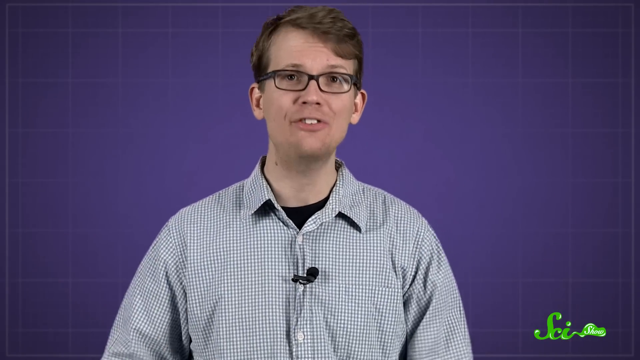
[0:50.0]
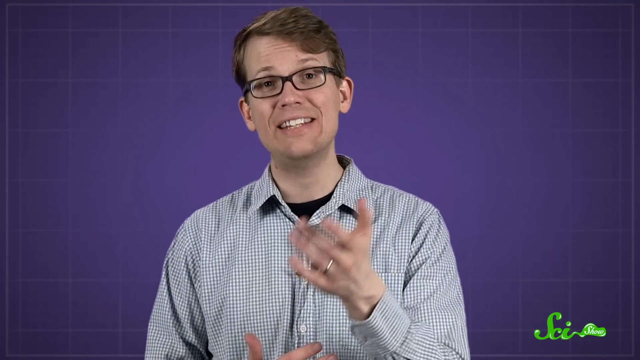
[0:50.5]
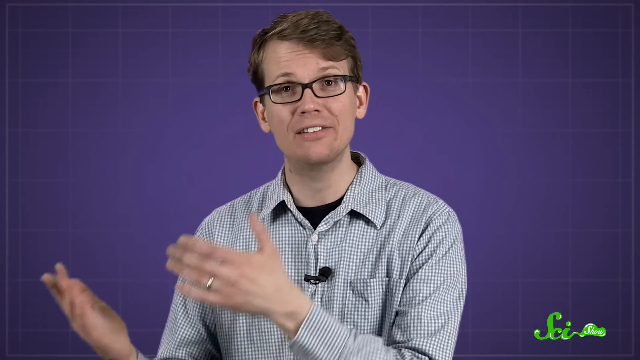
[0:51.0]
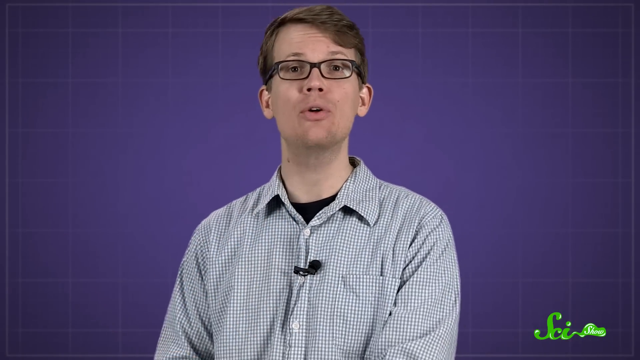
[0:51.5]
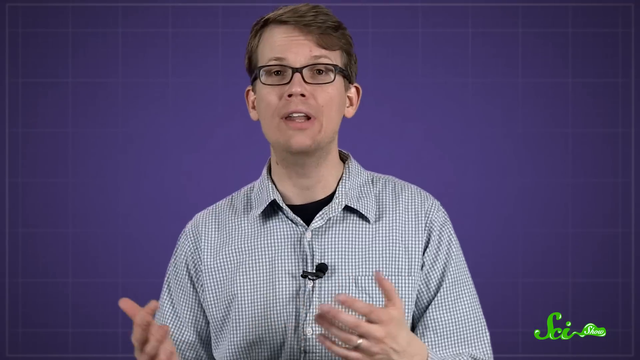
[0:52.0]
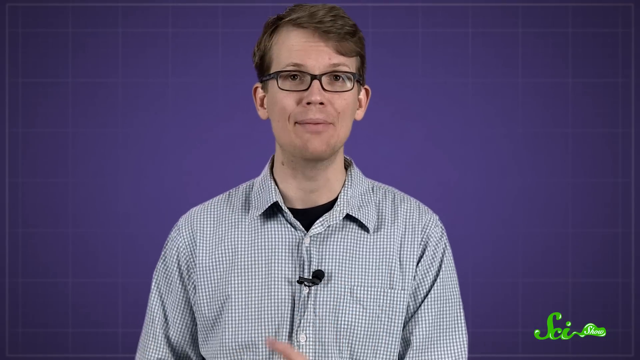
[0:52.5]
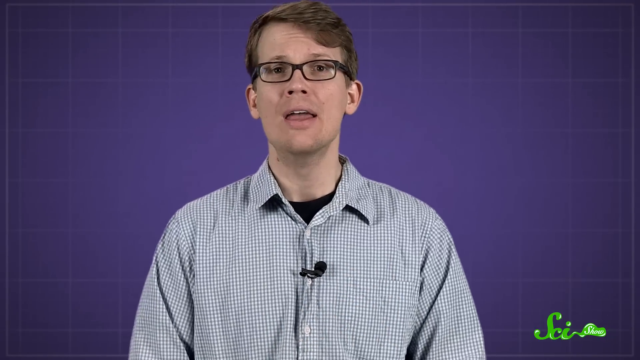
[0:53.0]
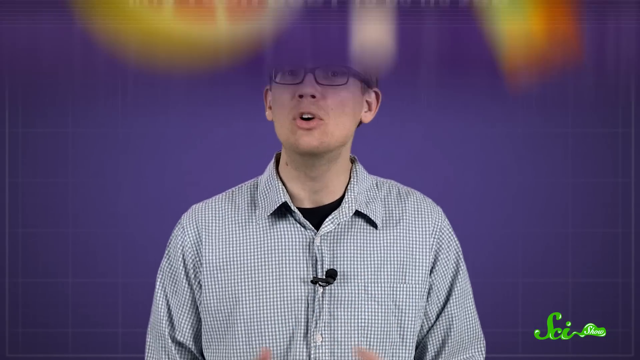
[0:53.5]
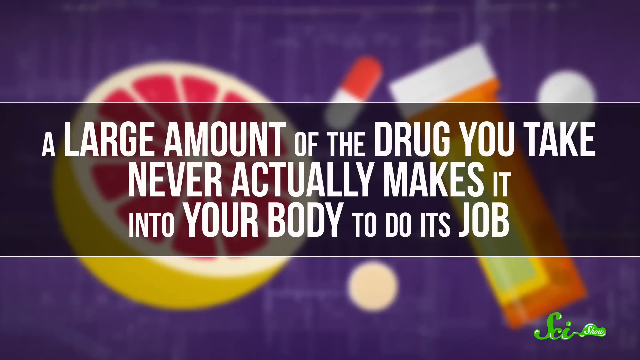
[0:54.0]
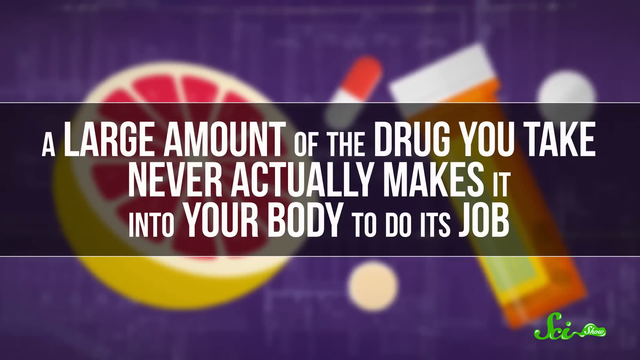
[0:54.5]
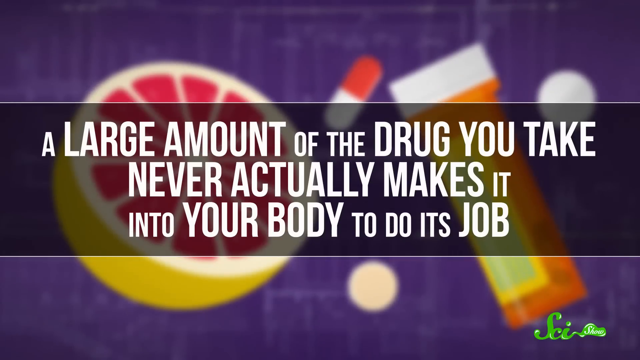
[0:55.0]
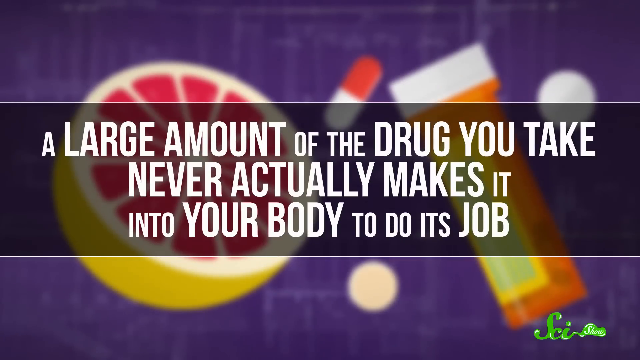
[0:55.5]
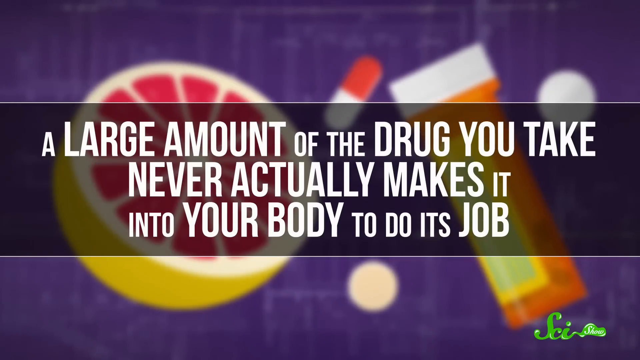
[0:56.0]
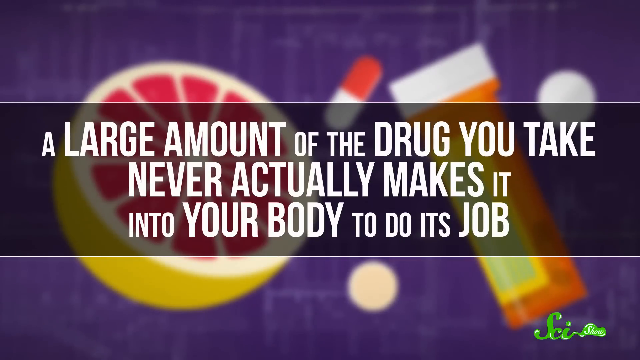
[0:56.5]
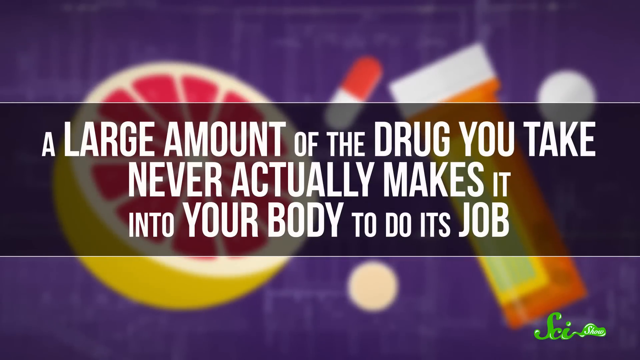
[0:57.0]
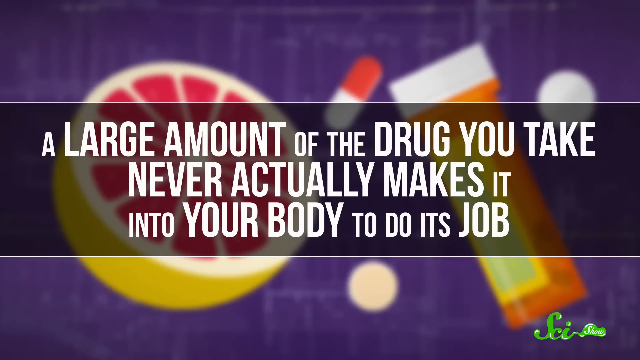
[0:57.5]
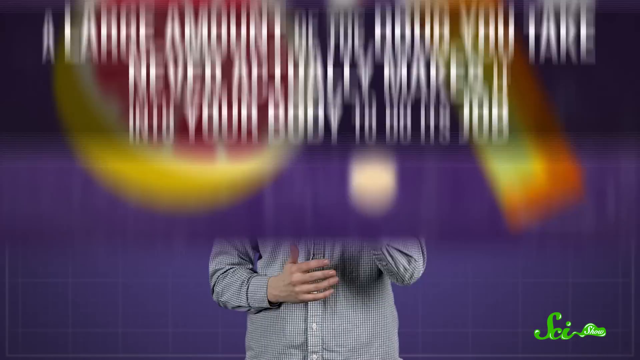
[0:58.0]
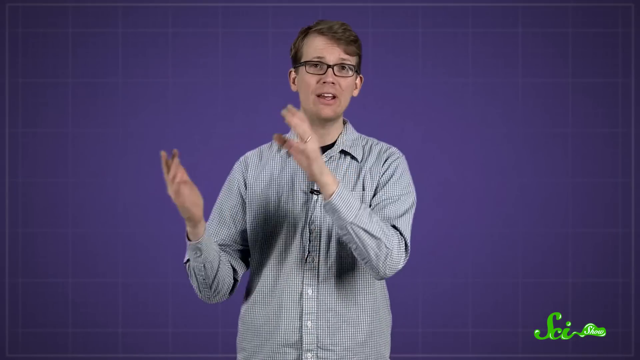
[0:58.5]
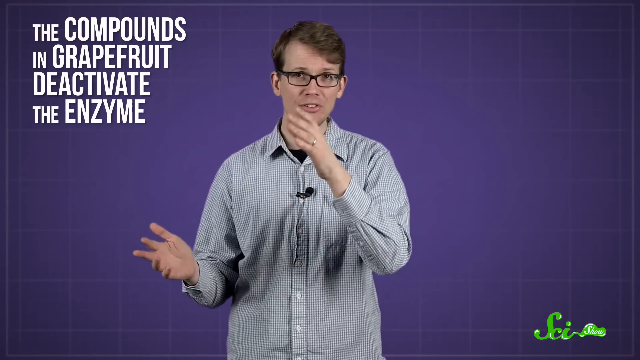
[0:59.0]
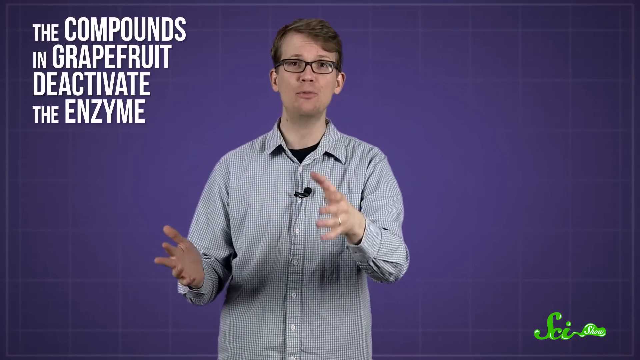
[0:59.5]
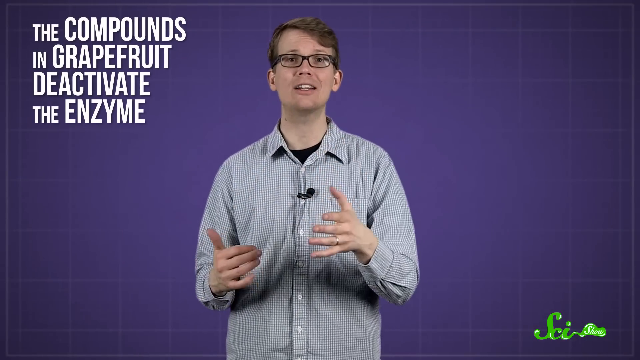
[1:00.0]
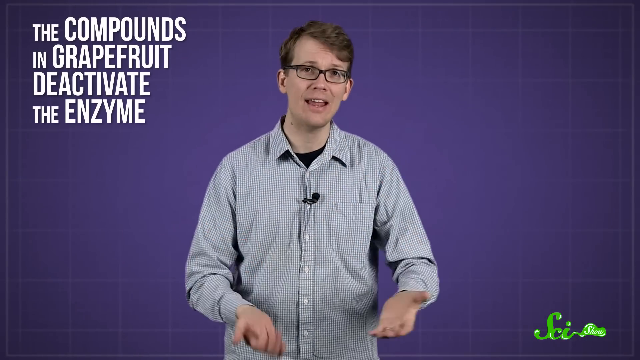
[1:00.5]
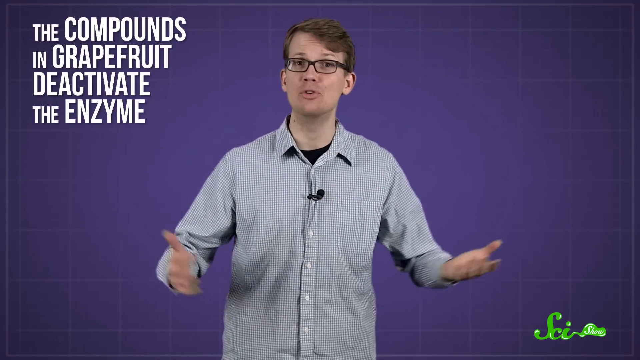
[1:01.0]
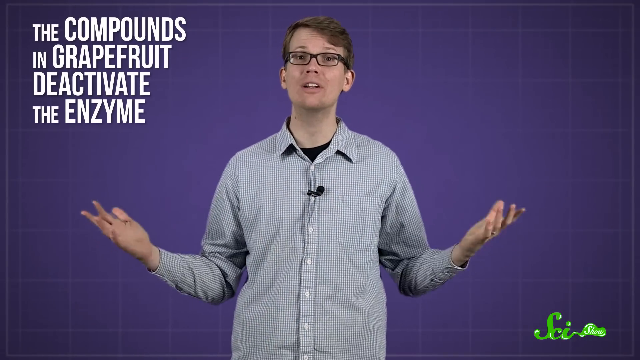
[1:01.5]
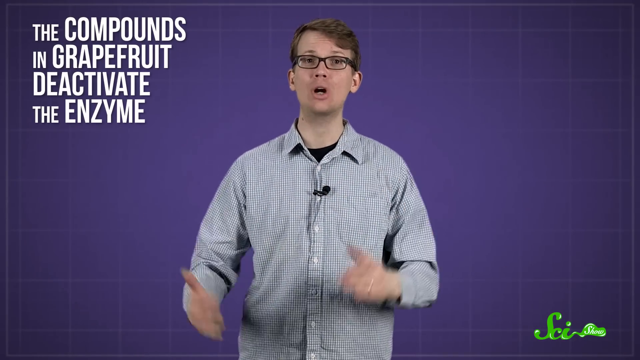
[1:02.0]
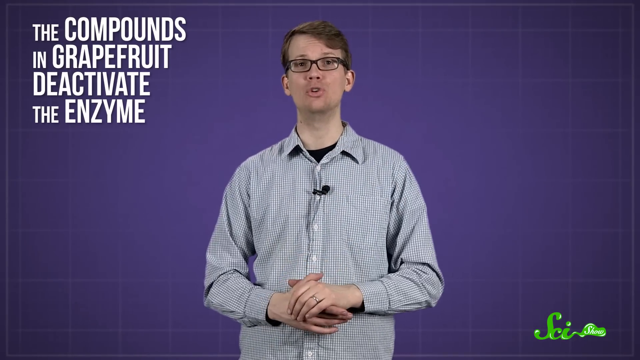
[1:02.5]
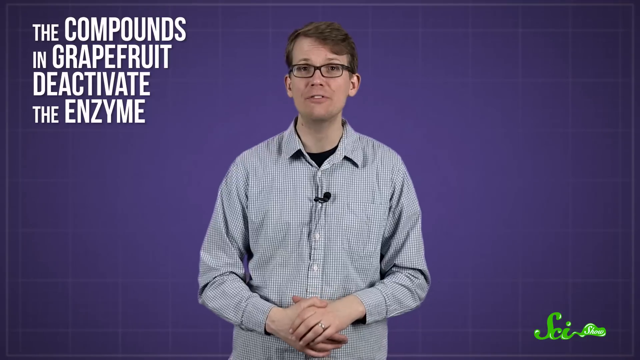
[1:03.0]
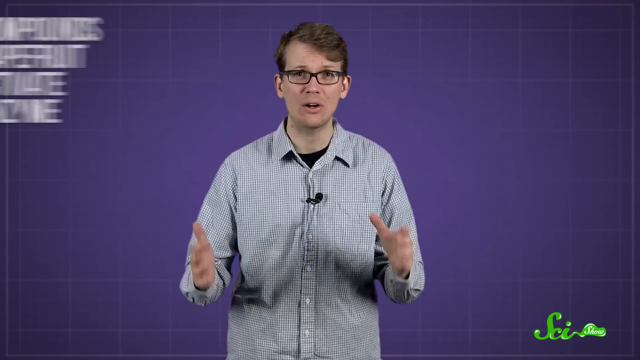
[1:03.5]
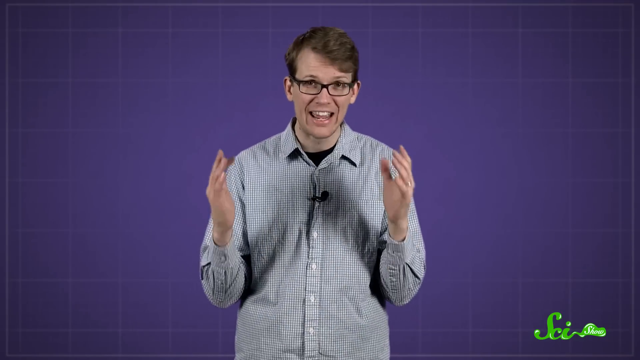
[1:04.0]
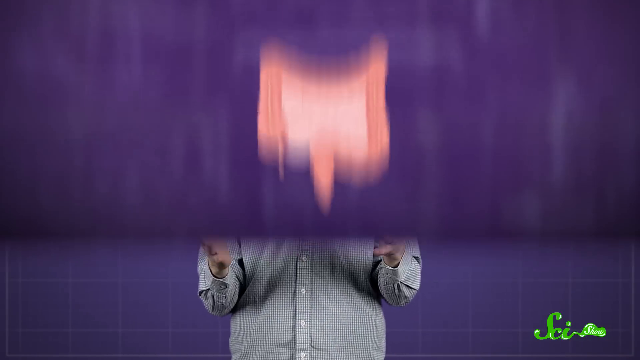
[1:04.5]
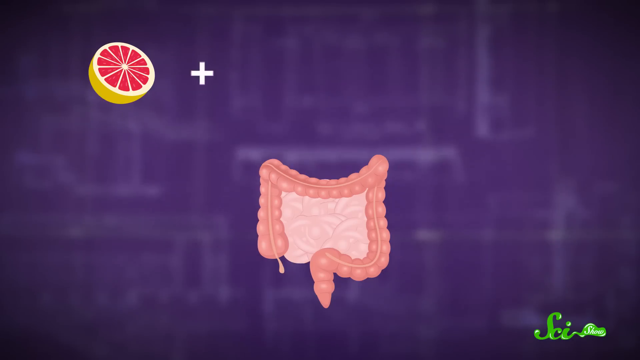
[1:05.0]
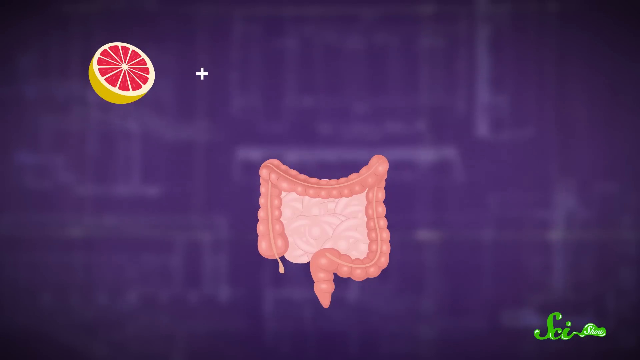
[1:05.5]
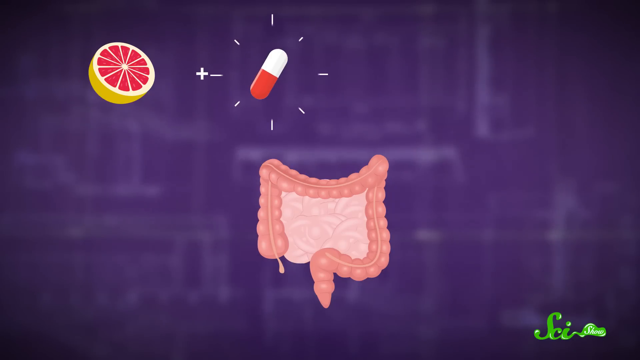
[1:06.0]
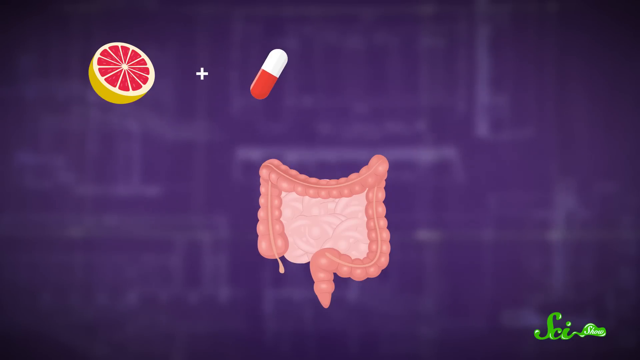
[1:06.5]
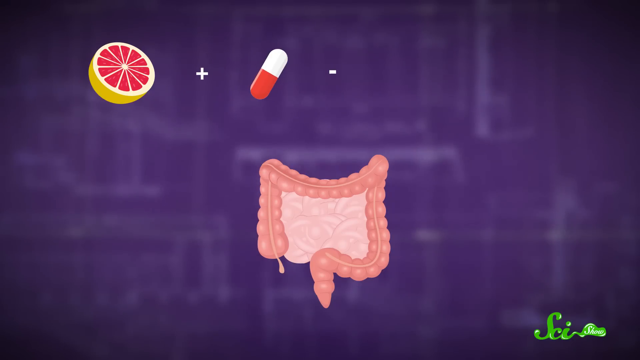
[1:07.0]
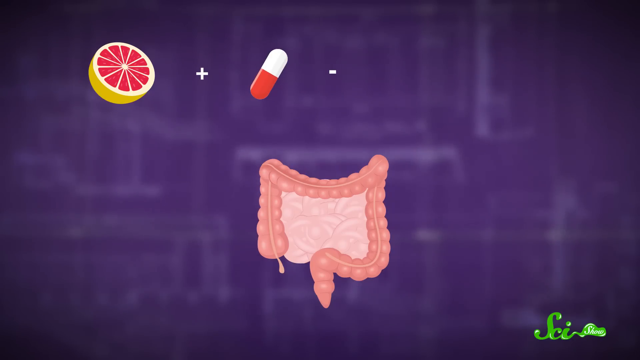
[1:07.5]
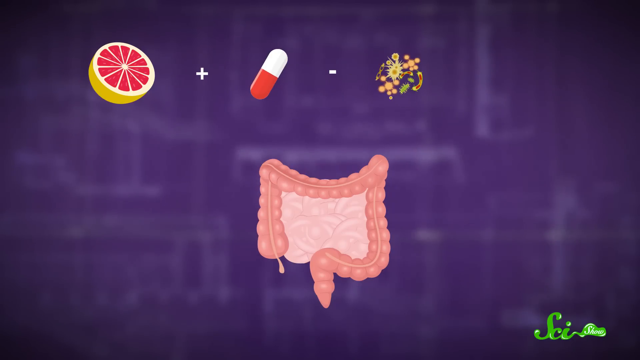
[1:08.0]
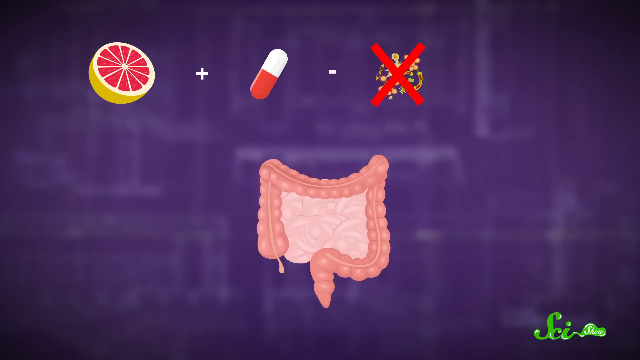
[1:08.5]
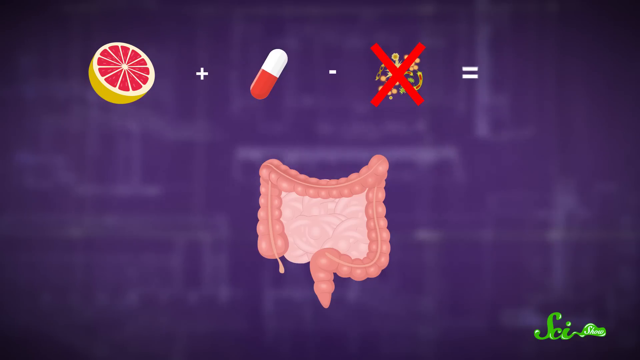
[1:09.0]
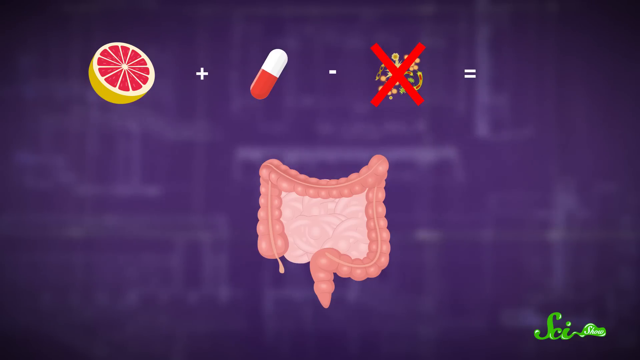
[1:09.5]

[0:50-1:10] The speaker returns, wearing the same clothes, with a pocket on his left side, talking in front of the purple background. Text reads "a large amount of the drug you take never actually makes it into your body to do its job." He keeps raising his hands, and he wears a wedding ring. Text reads "The compounds in grapefruit deactivate the enzyme." The grapefruit appears again, cut open, yellow, its pieces looking kind of like a flower, with "plus" and "medication". The digestive system appears with enzymes, followed by "equal" and a question mark. The brand "Sci" is in green in the right-hand corner.